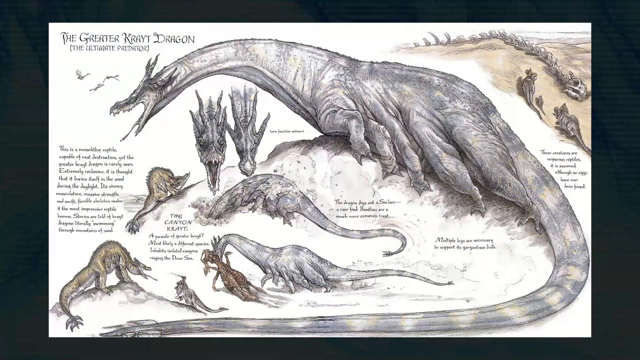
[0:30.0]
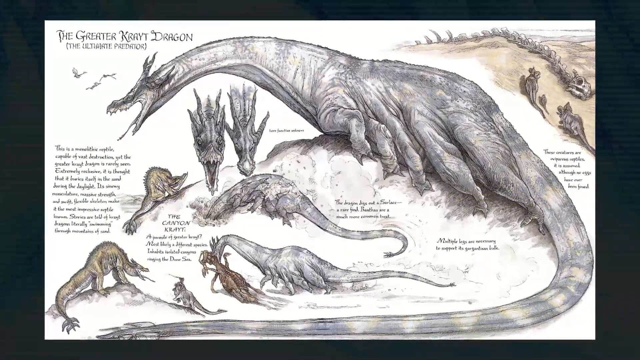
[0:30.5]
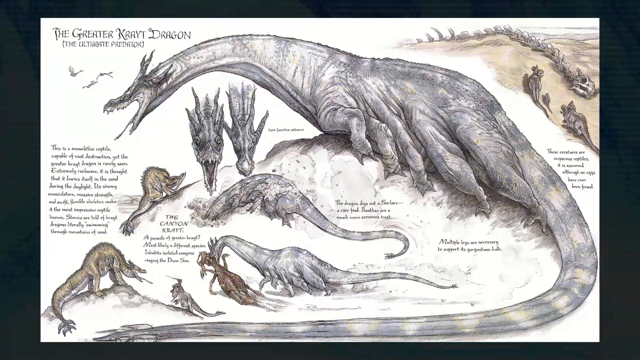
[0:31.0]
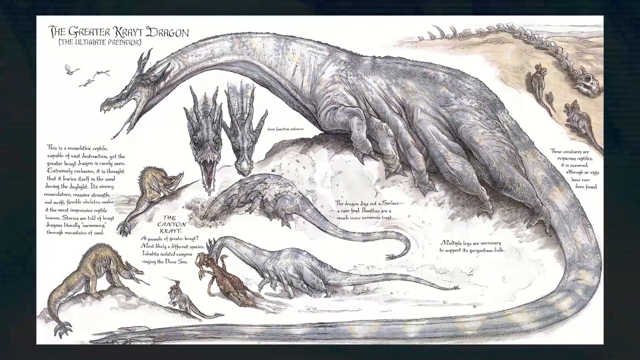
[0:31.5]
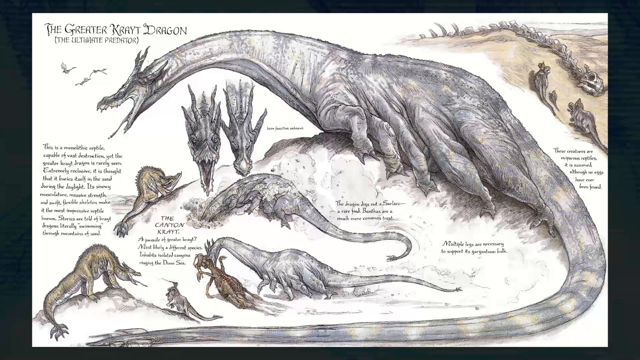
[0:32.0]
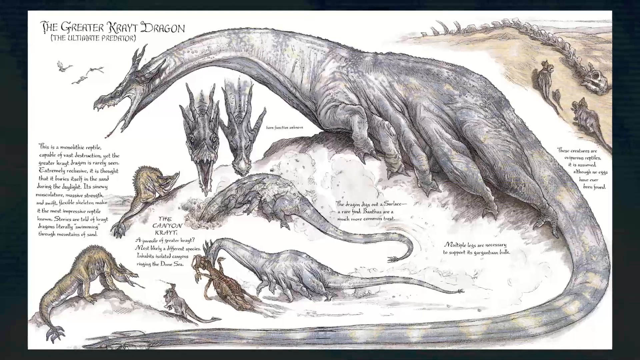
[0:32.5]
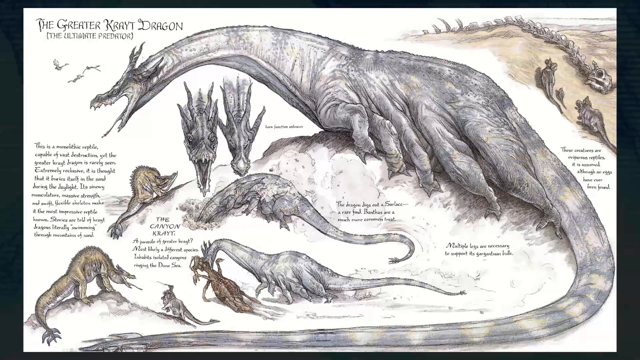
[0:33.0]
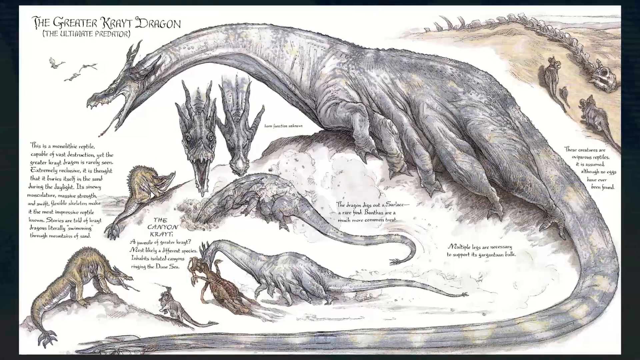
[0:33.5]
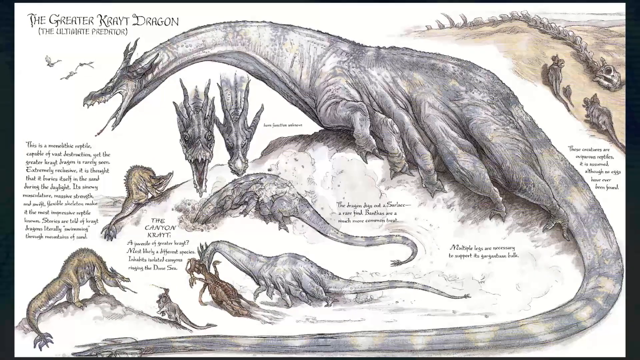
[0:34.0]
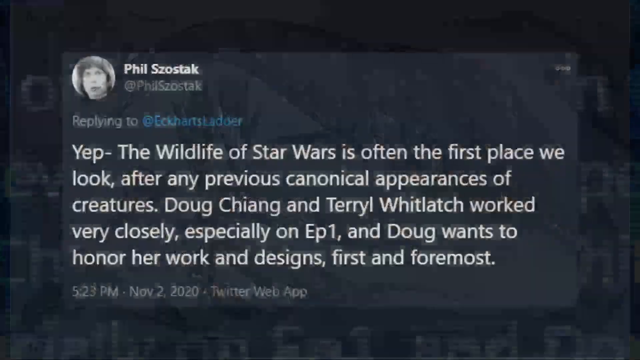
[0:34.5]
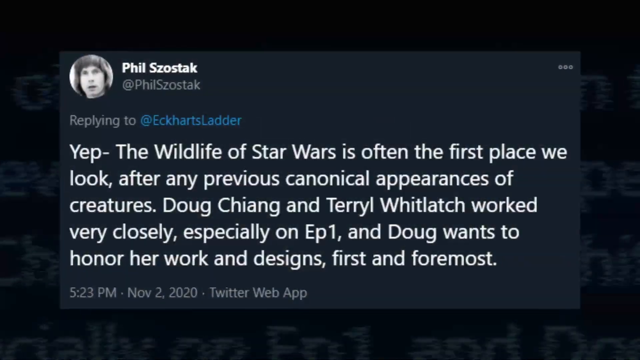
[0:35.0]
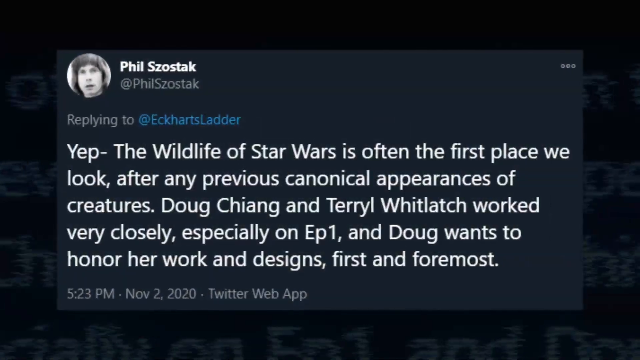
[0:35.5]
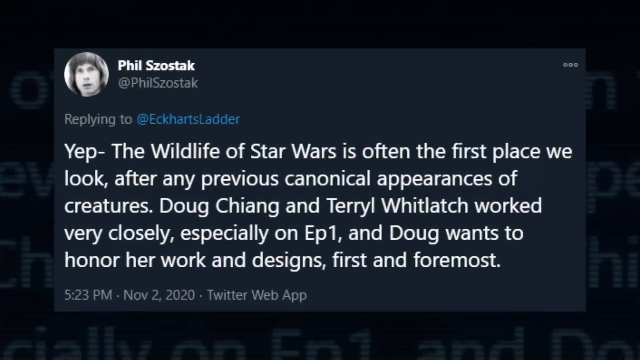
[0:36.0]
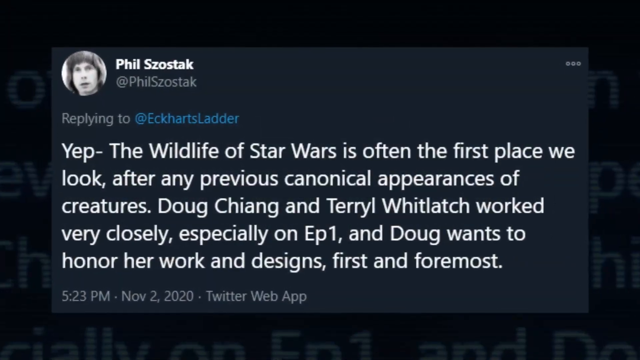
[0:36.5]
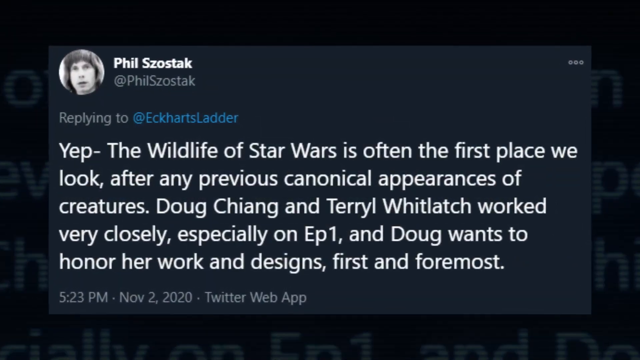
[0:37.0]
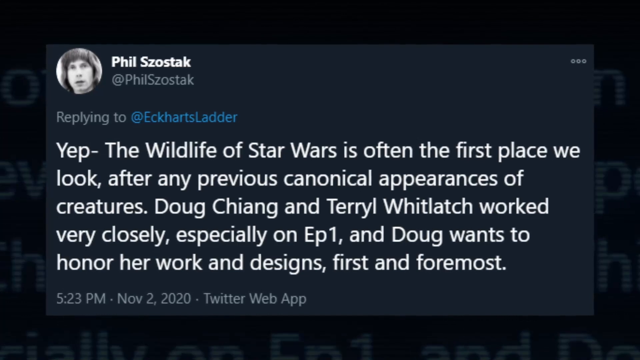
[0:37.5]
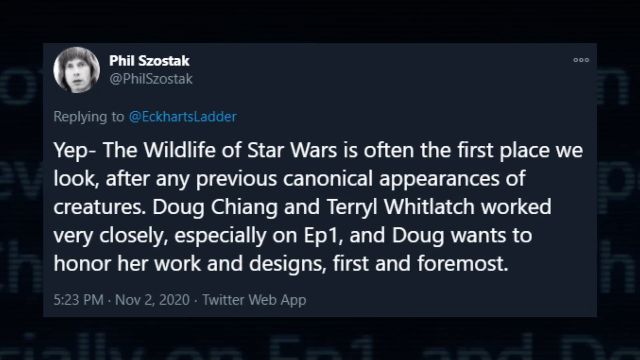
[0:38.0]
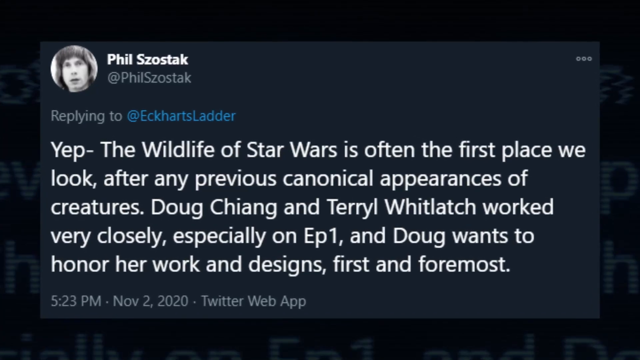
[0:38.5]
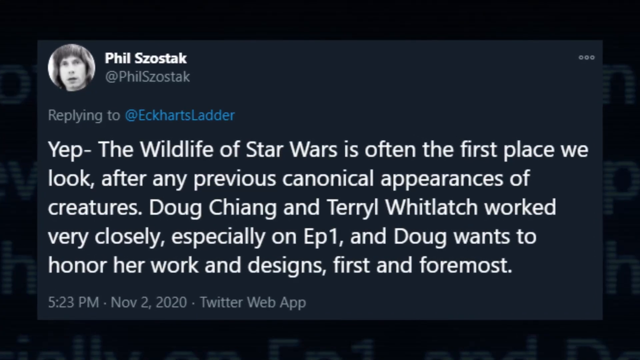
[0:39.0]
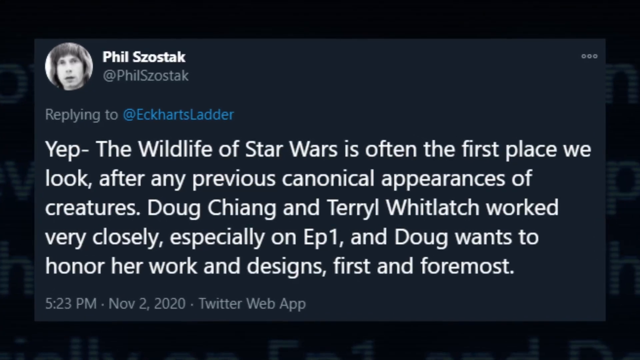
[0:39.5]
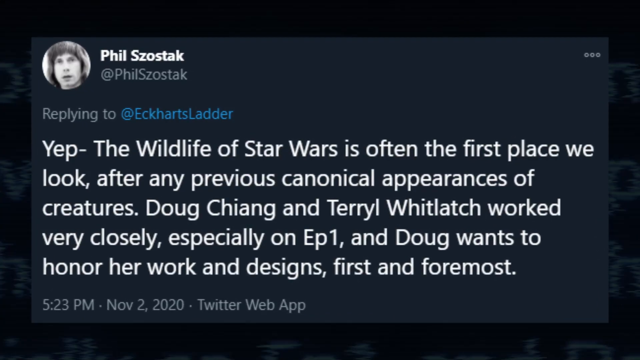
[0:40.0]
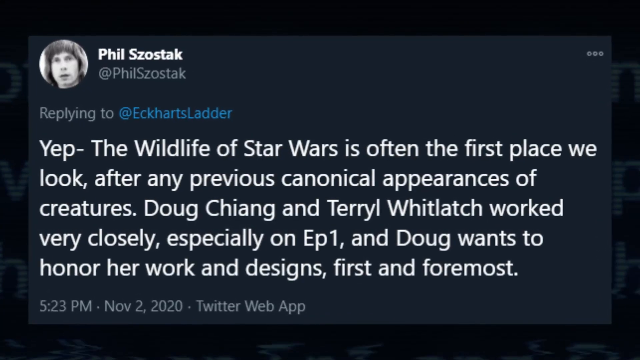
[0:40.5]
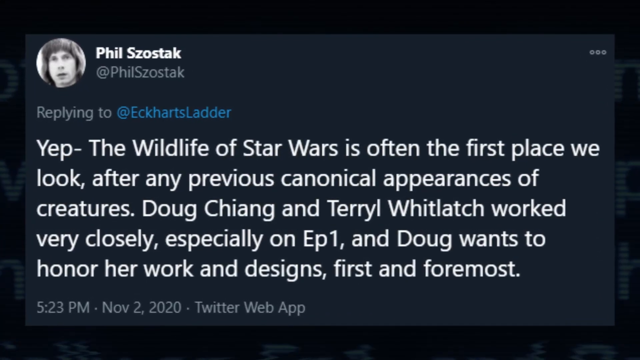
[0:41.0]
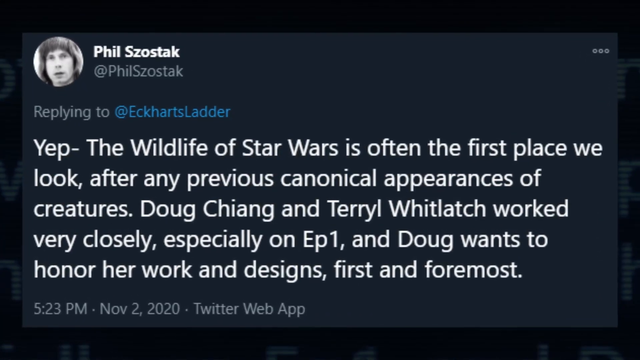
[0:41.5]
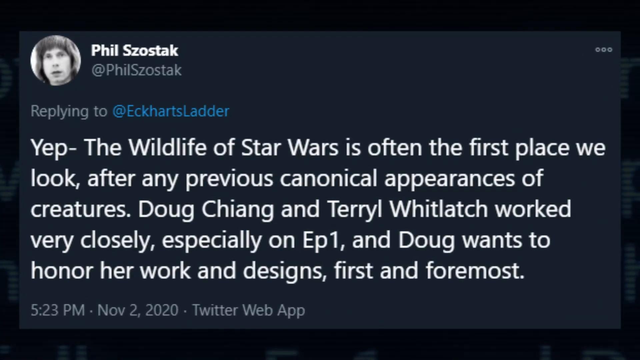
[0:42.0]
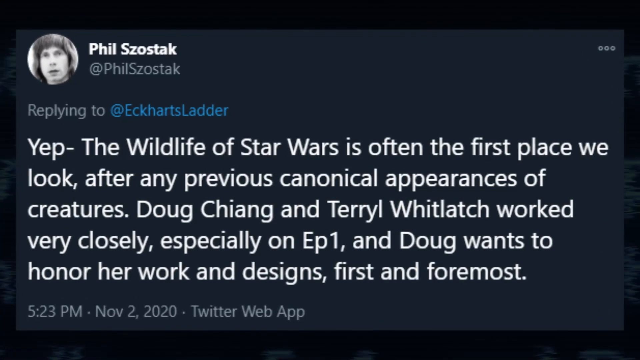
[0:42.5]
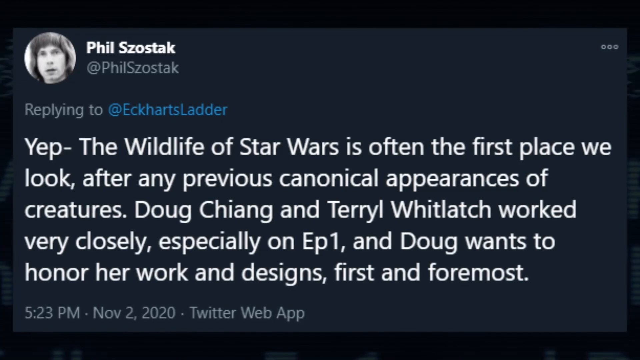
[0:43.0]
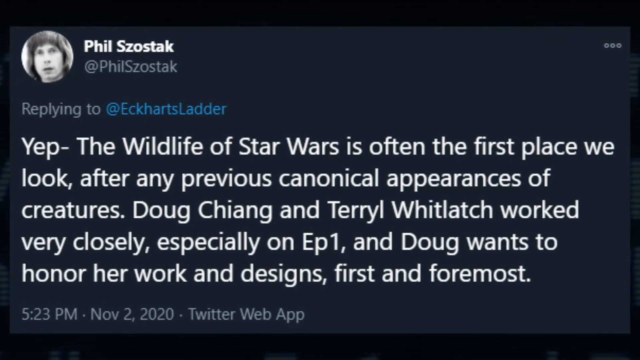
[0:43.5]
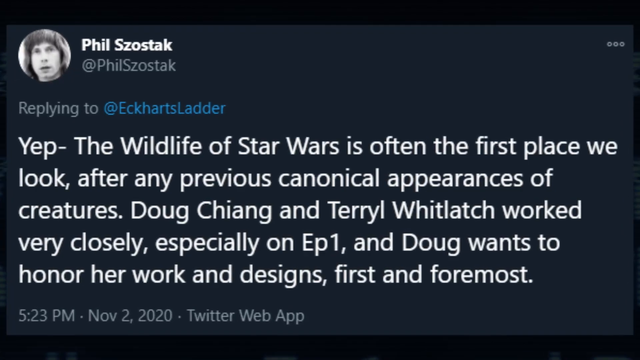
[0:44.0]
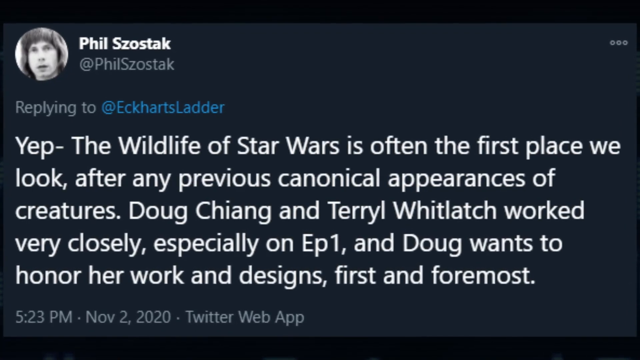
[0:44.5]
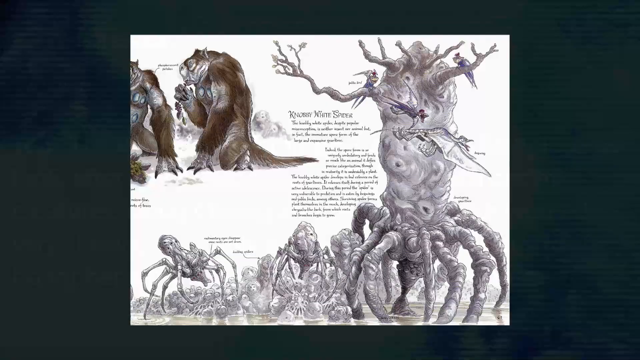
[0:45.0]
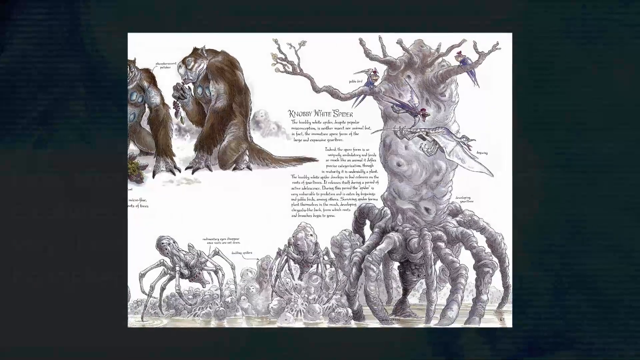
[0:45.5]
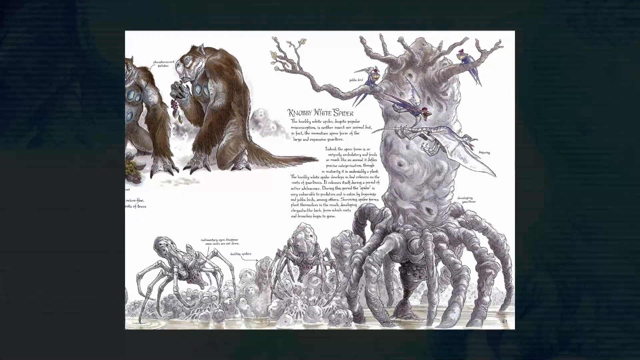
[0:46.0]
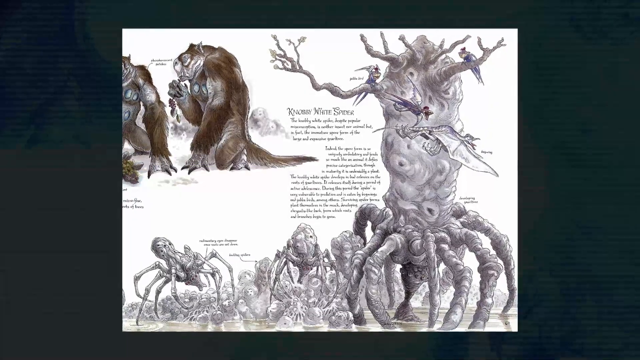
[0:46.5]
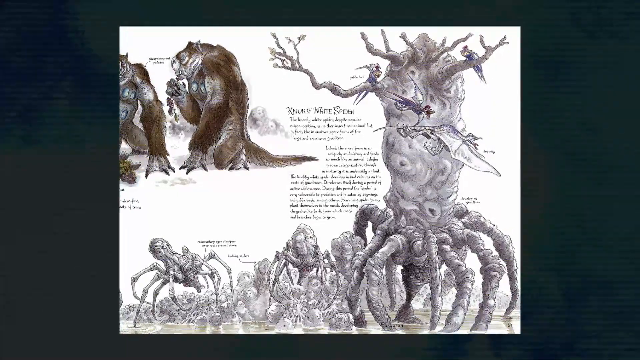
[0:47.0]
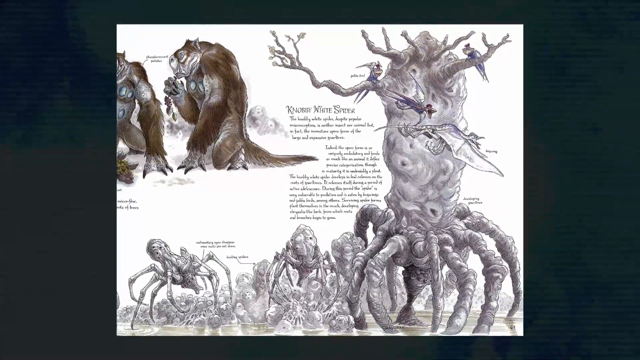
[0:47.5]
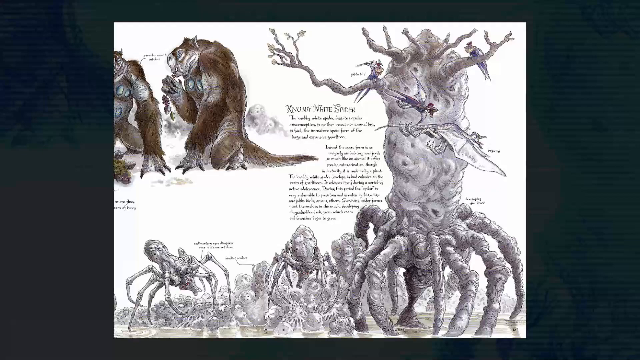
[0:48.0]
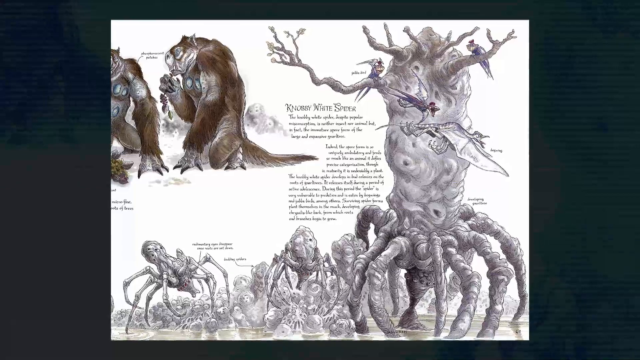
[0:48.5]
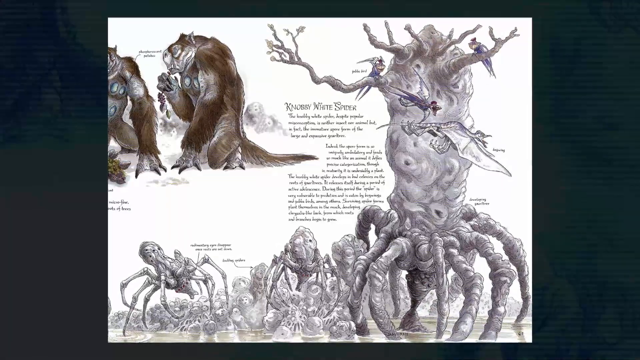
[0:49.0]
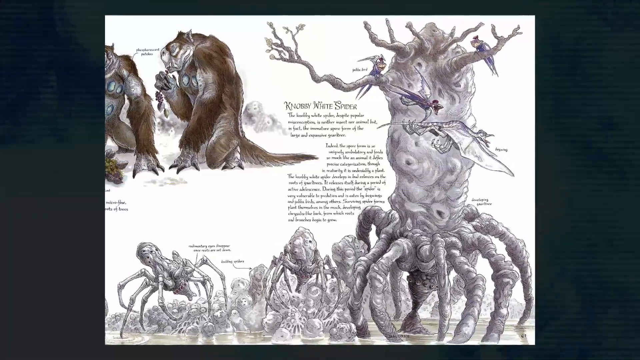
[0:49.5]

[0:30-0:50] A page shows illustrations of dragon-like creatures: a very large creature in the center, smaller dragons below it, and illustrations of two dragon faces. There is some text on the page, and a caption at the top reads "The Greater Krayt Dragon, The Ultimate Predator." The camera appears to get closer to the illustrations. Then a social media post by someone named Phil Szostak appears, saying: "Yep, The Wildlife of Star Wars is often the first place we look, after any previous canonical appearances of creatures. Doug Chiang and Terryl Whitlatch worked very closely, especially on Ep. 1, and Doug wants to honor her work in designs, first and foremost." Next is an illustration of what looks like a tree whose roots look like legs, as if it is walking. Other similar figures on the ground look like spiders, and at the top is an illustration of a monkey or bear-like creature.